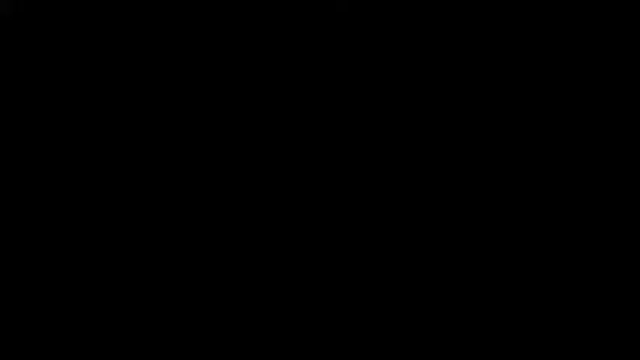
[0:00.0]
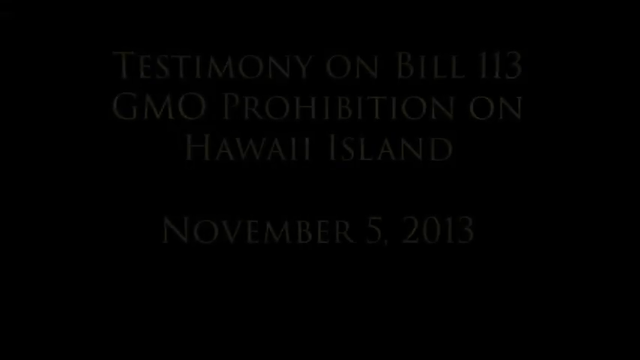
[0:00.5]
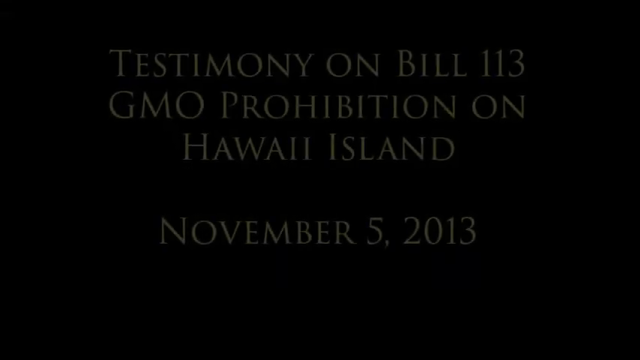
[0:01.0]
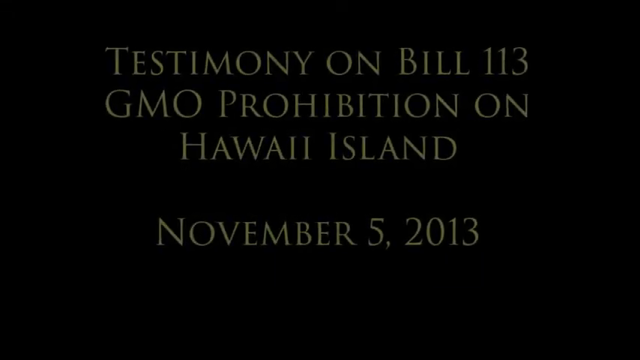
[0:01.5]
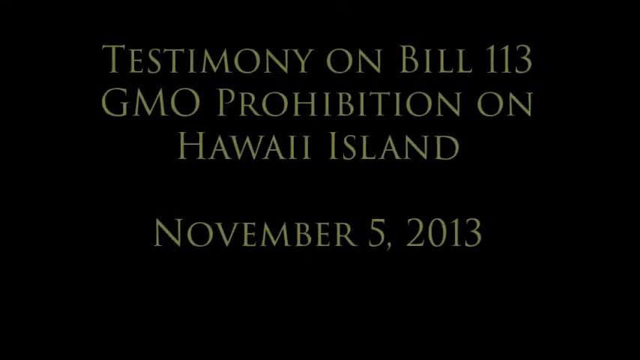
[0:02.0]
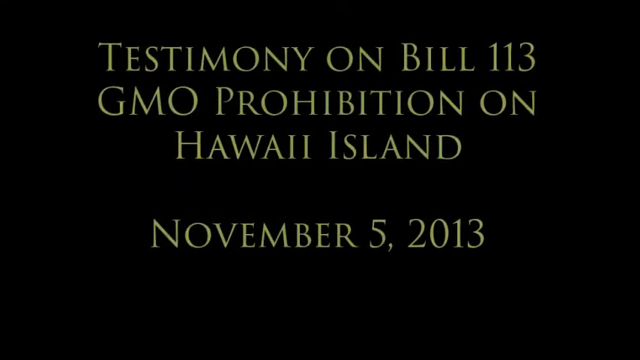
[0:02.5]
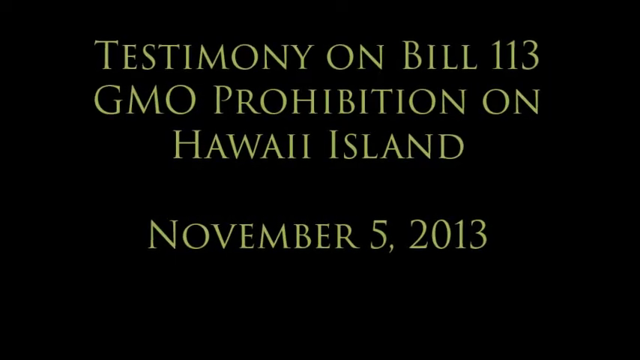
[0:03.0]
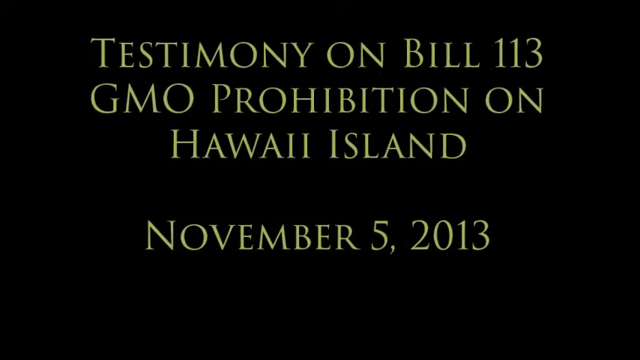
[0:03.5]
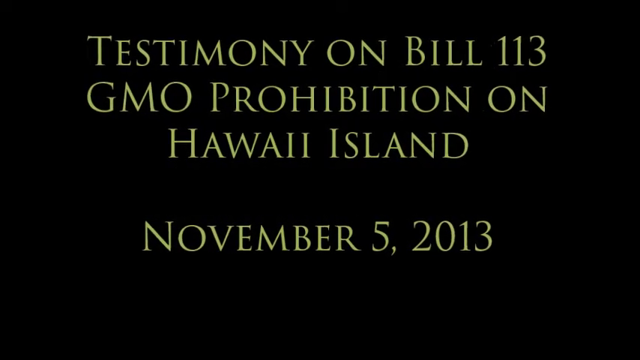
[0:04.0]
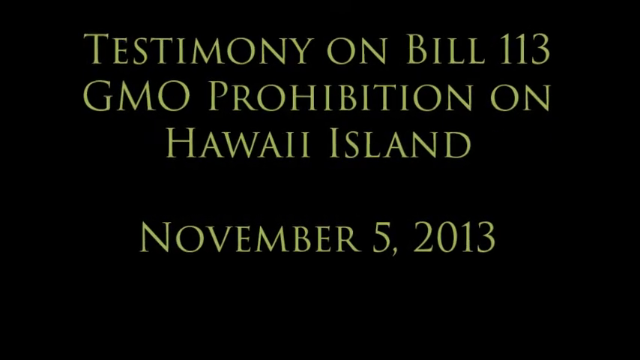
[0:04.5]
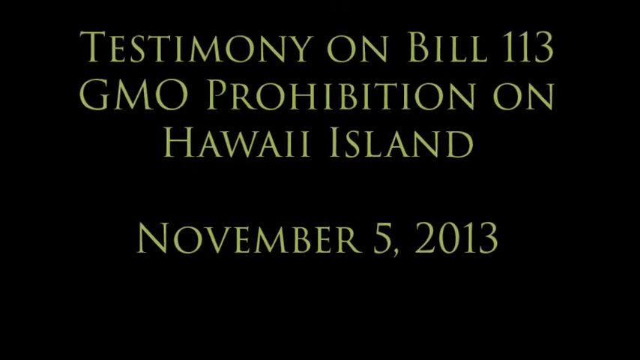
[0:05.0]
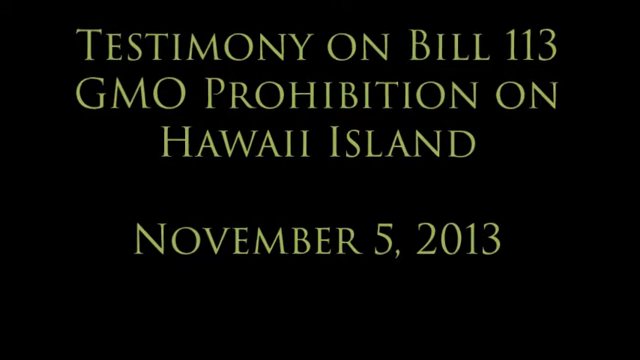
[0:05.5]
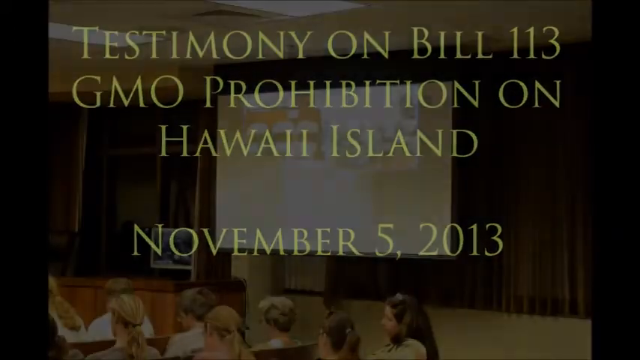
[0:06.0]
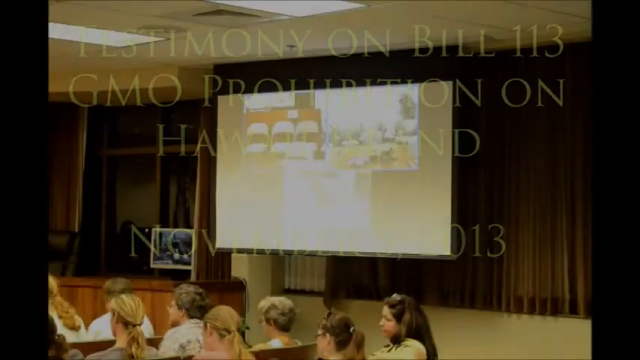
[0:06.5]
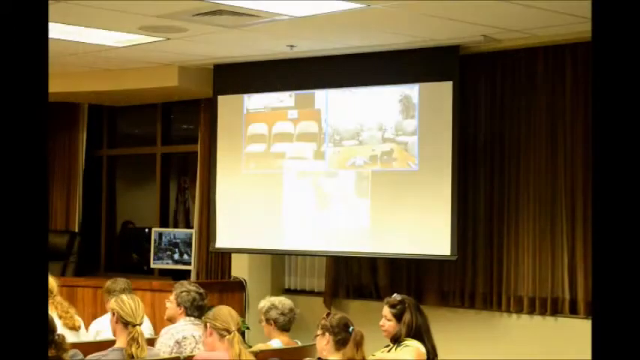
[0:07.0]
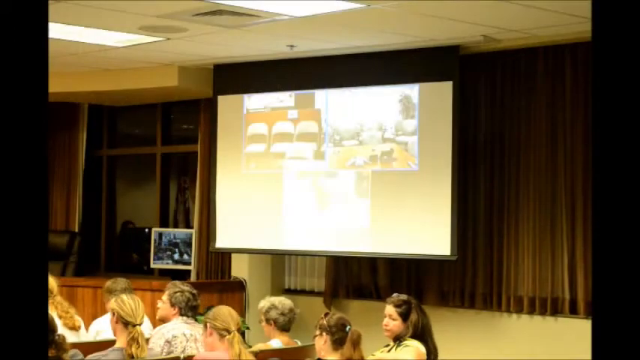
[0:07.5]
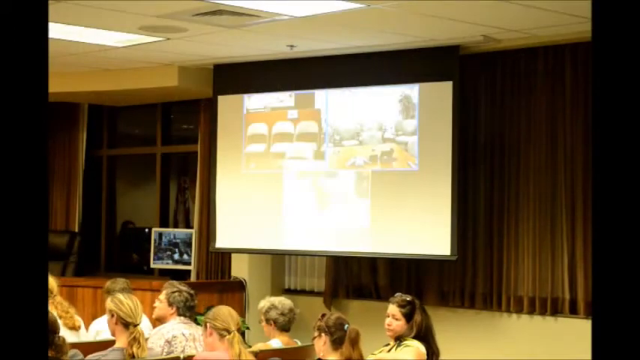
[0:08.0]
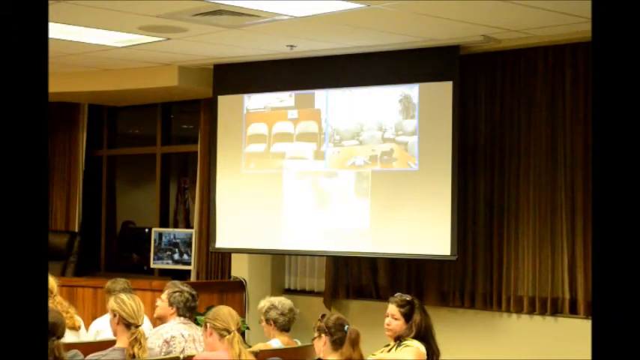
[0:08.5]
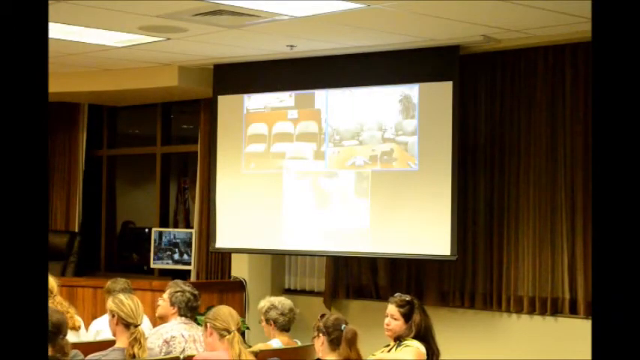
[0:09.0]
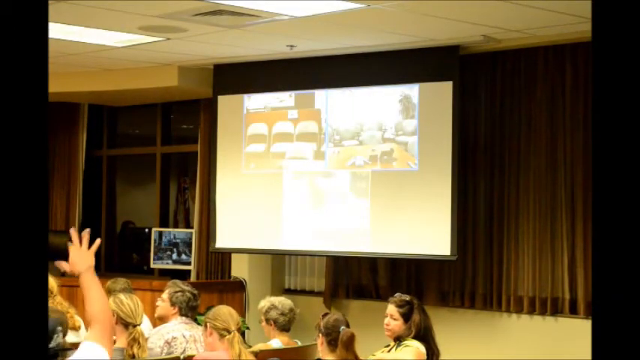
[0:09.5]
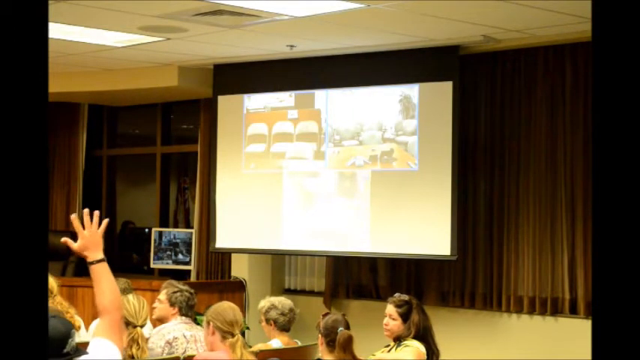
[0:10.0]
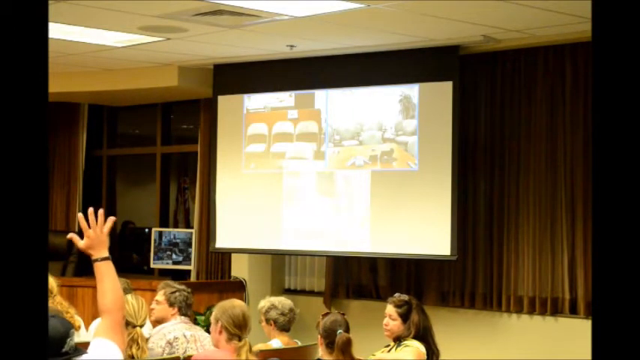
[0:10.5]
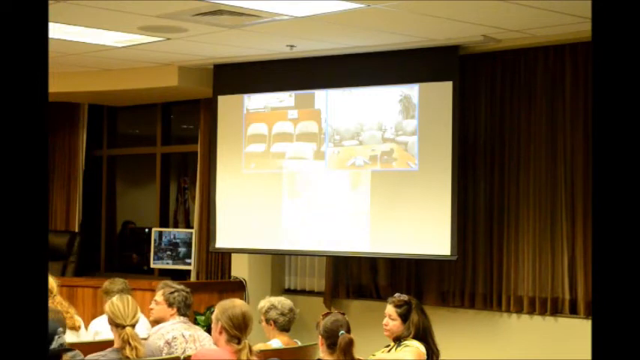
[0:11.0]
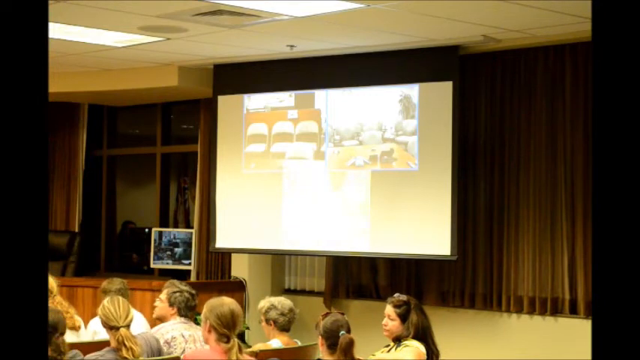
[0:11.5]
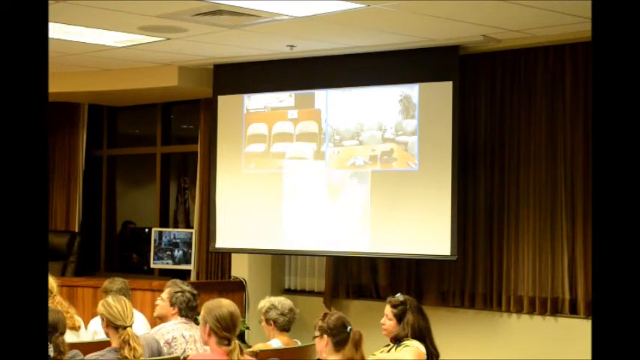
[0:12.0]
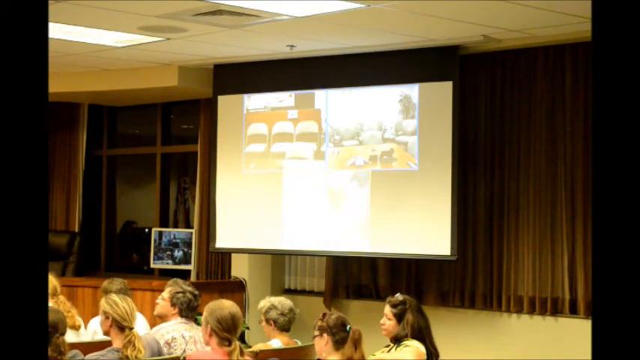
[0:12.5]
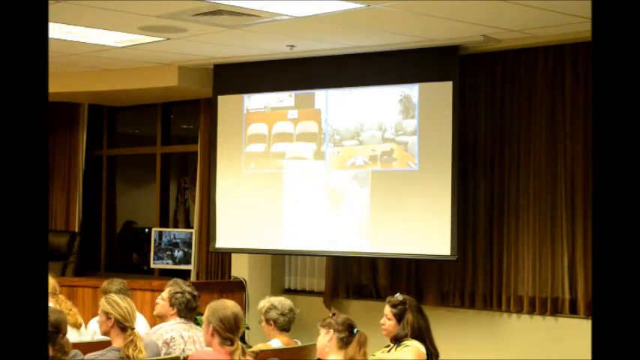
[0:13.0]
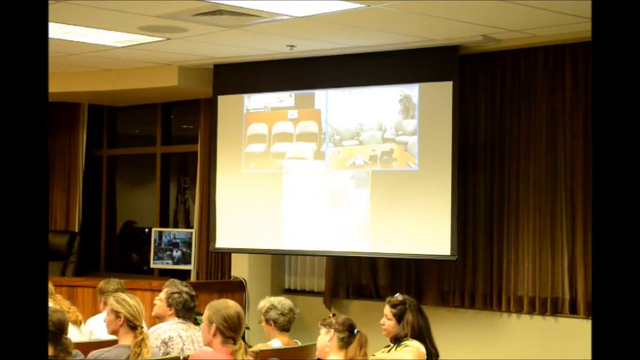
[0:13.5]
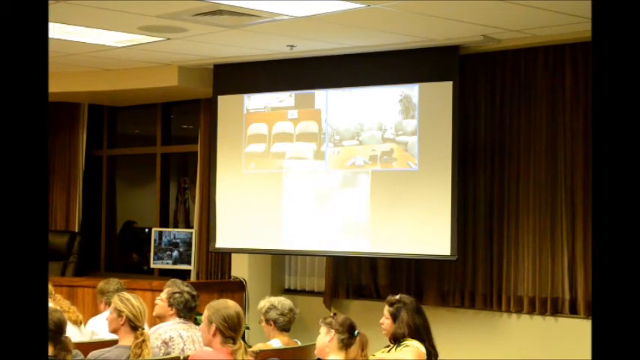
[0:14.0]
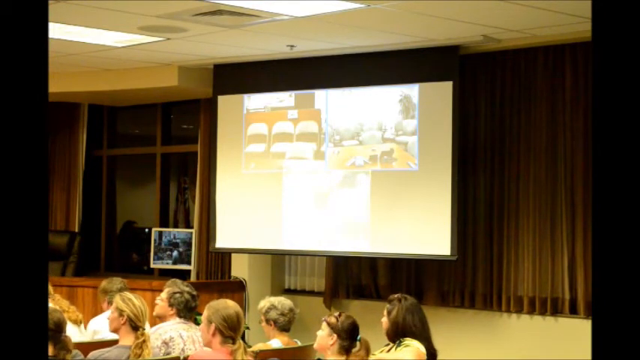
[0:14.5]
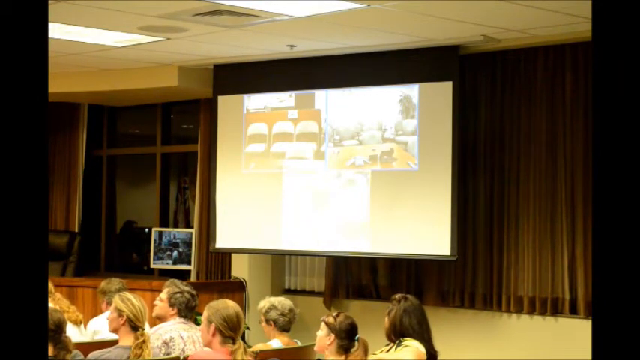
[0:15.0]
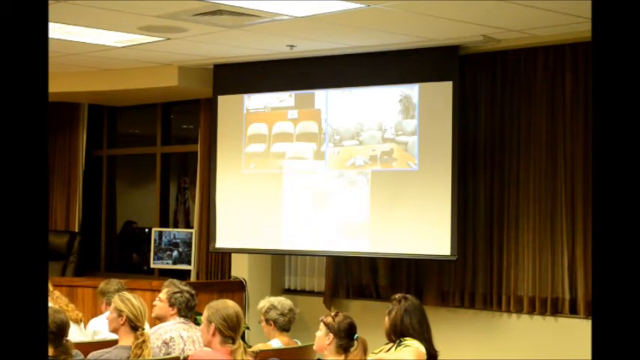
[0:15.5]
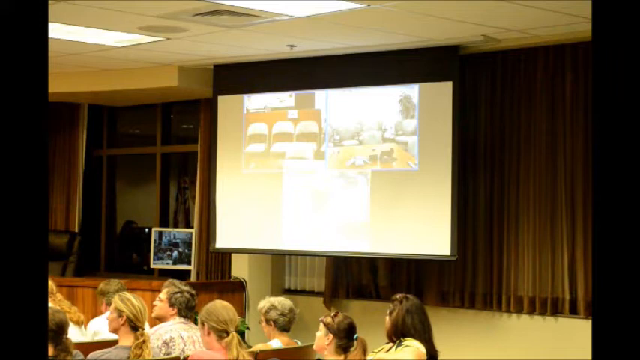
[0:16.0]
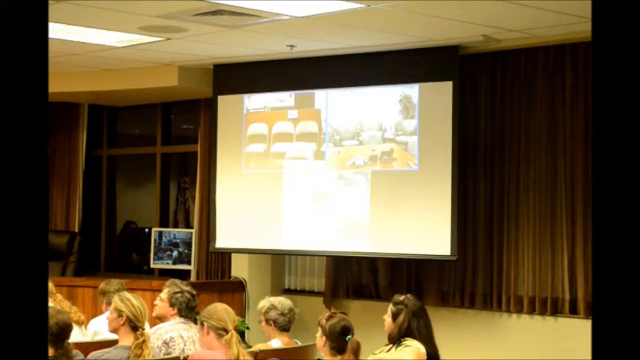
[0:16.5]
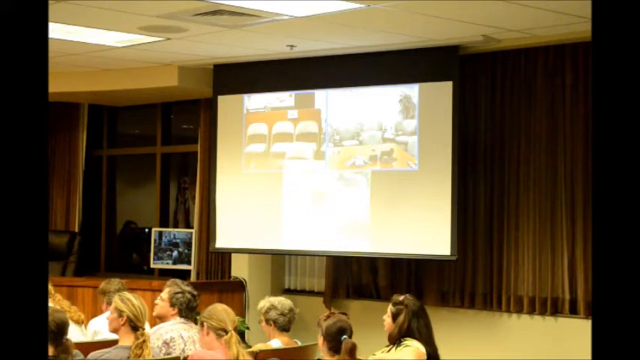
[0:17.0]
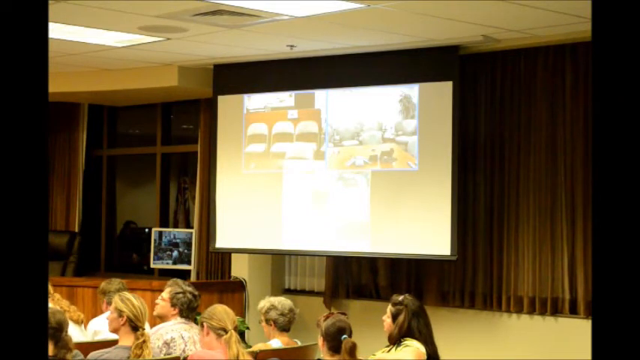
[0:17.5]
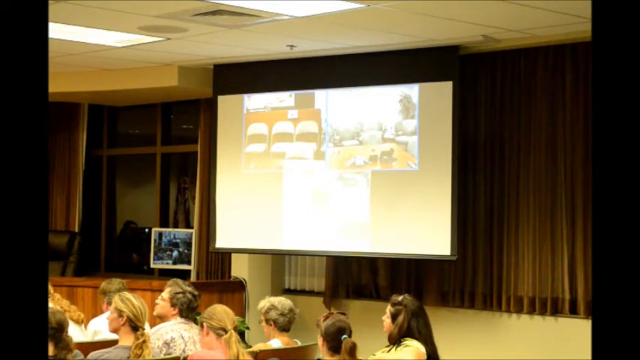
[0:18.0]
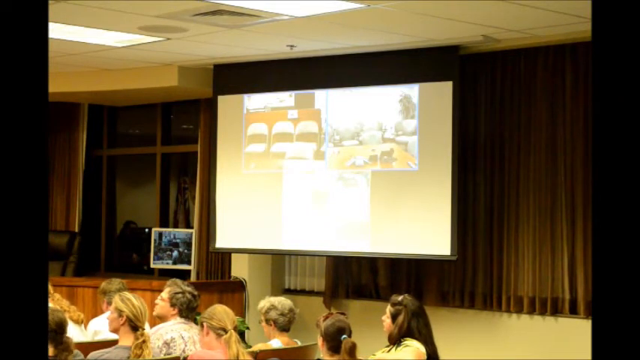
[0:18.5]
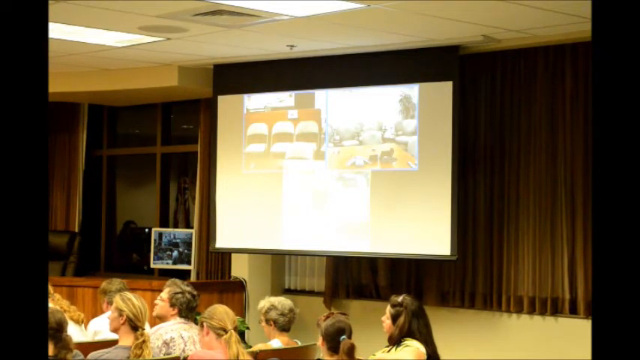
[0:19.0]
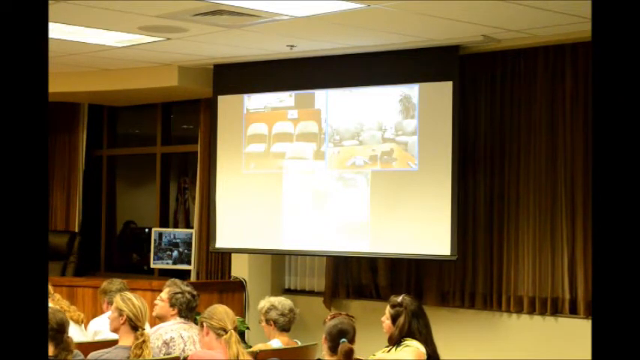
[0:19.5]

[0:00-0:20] The camera slowly zooms in on text reading "Testimony on poll 113 GMO prohibition on Hawaii island November 5 2013." The scene then moves into a room with a huge screen, on which something appears to be projected while people watch. Someone lifts a hand and waves. Some people are not watching the screen; they face the opposite direction, looking at something else. The picture quality is very poor and unclear, as if filmed with an old or low-quality camera. The camera seems to focus on the people sitting in the room.